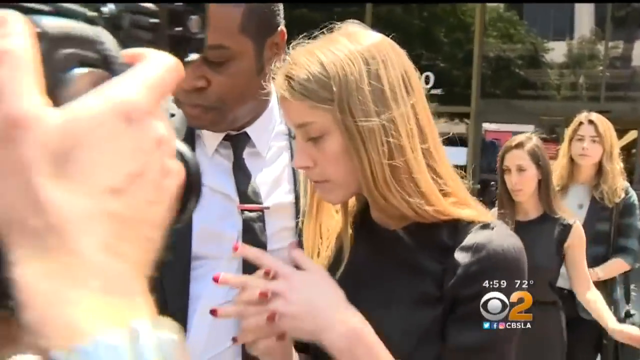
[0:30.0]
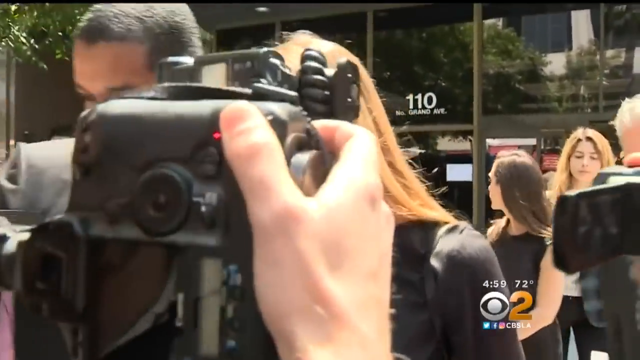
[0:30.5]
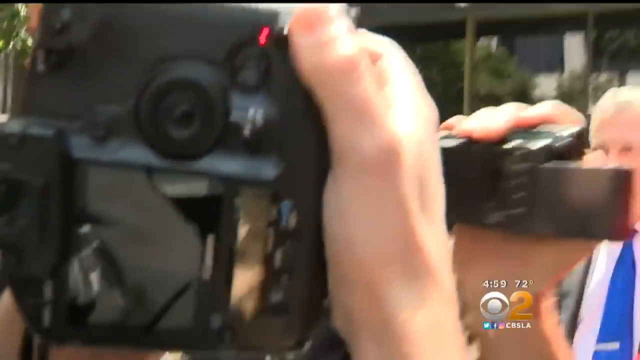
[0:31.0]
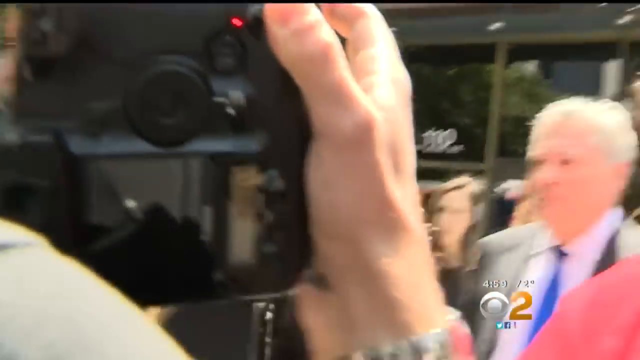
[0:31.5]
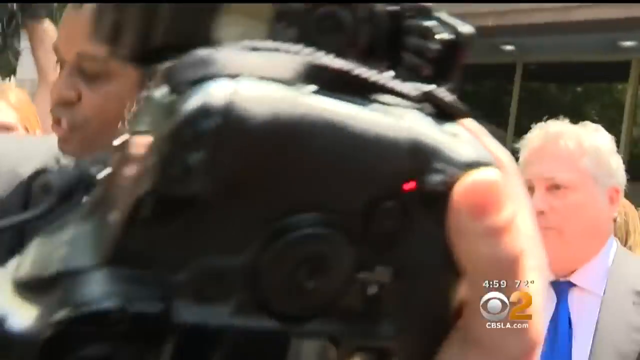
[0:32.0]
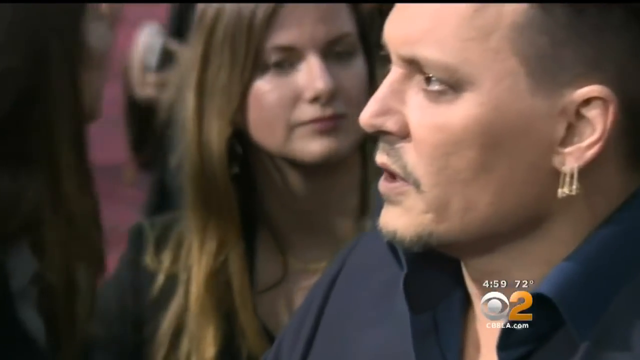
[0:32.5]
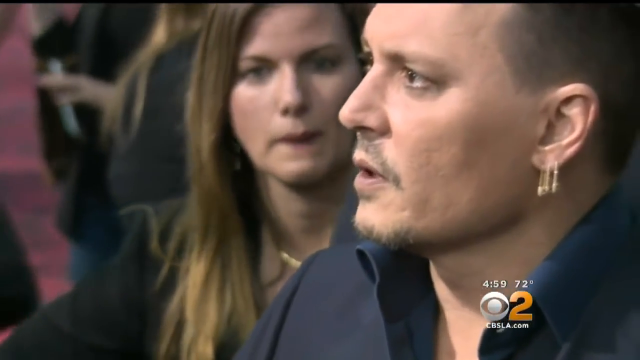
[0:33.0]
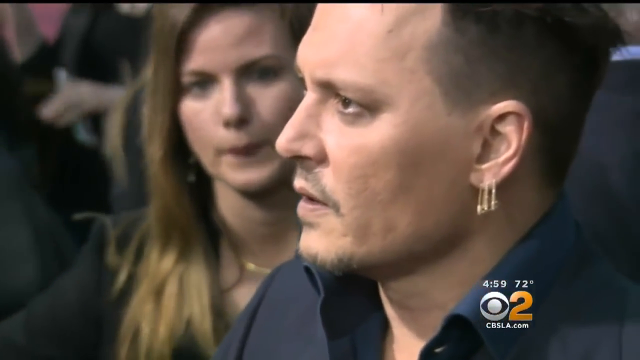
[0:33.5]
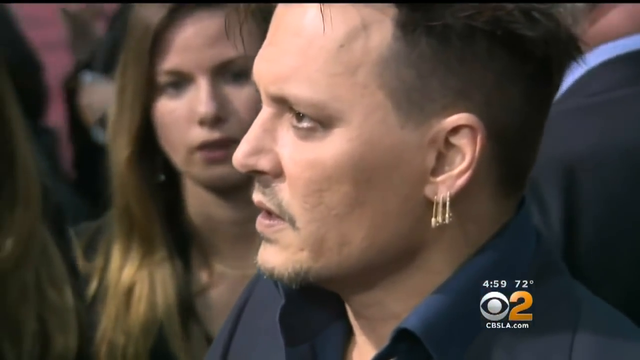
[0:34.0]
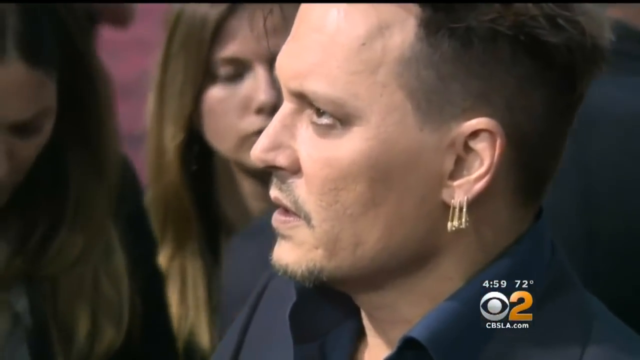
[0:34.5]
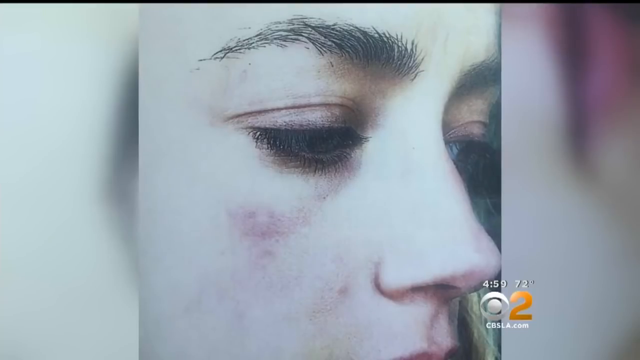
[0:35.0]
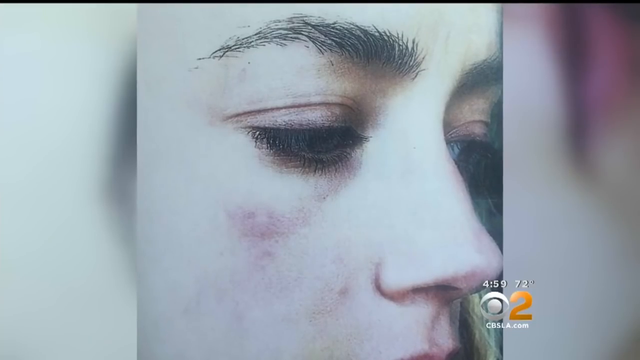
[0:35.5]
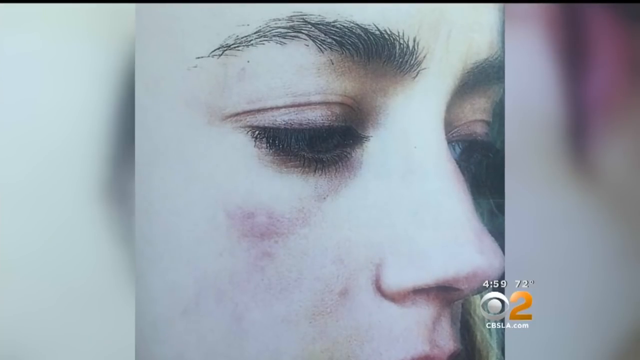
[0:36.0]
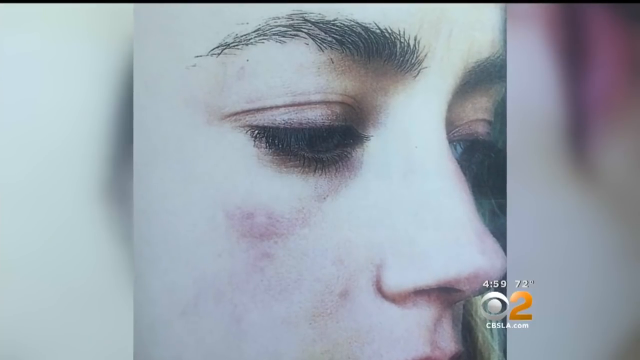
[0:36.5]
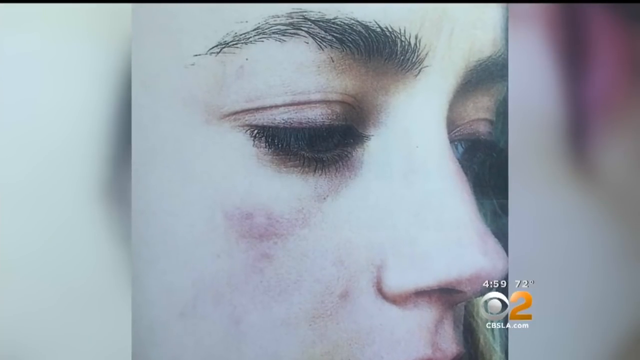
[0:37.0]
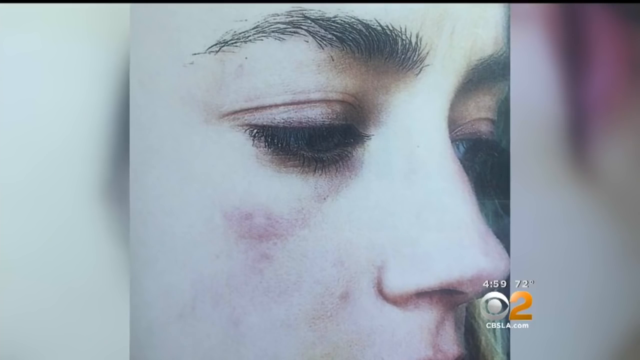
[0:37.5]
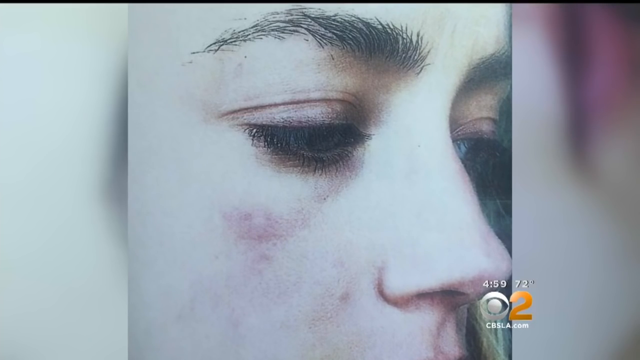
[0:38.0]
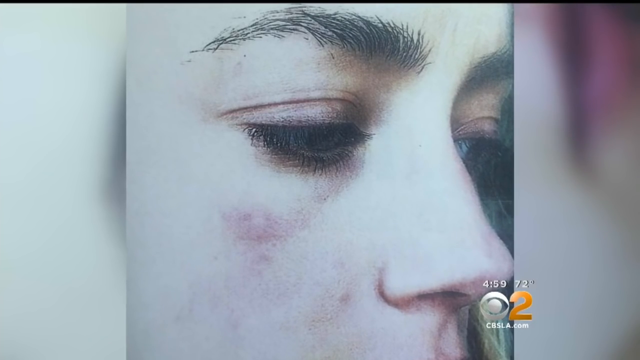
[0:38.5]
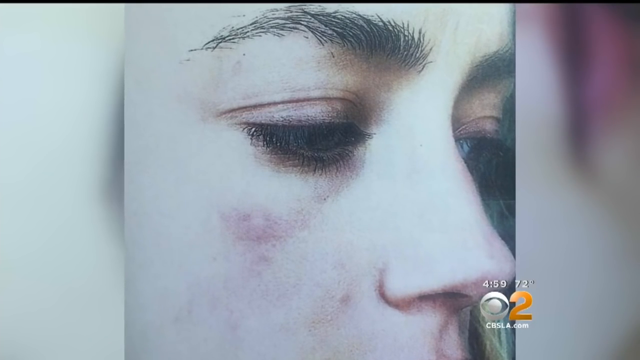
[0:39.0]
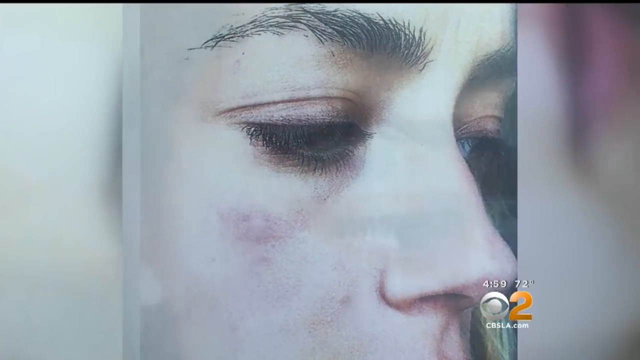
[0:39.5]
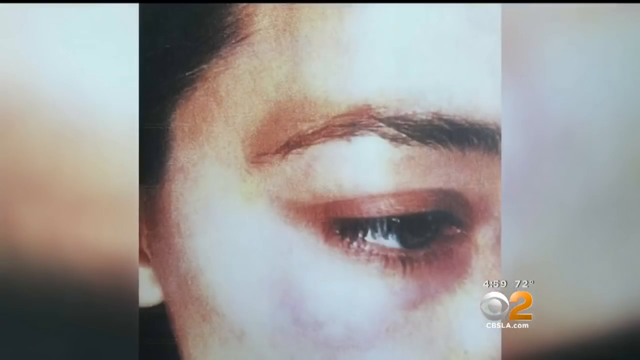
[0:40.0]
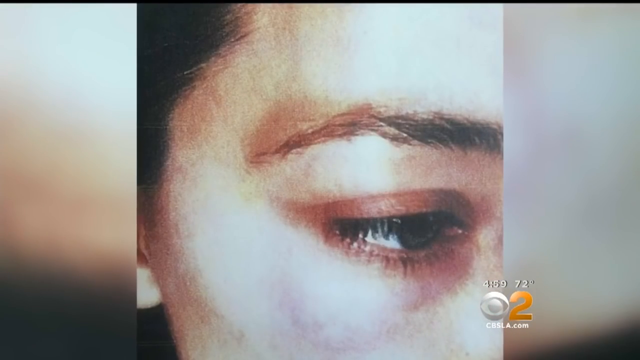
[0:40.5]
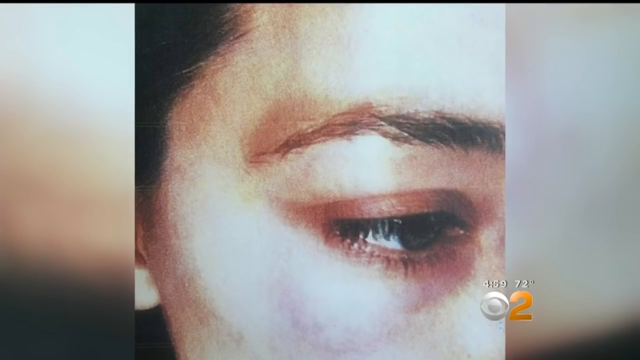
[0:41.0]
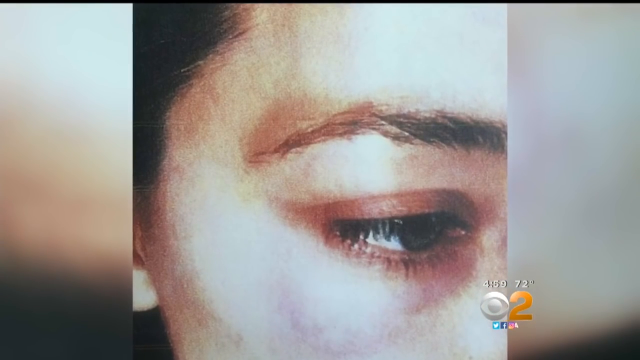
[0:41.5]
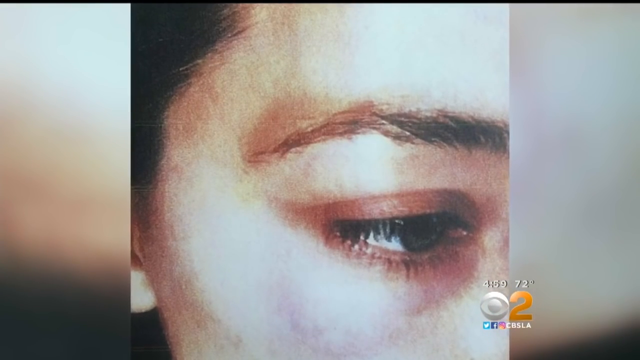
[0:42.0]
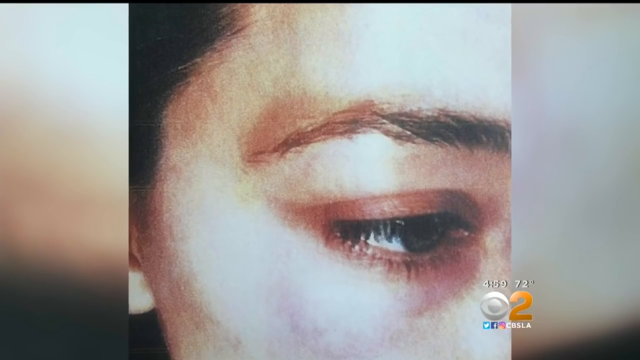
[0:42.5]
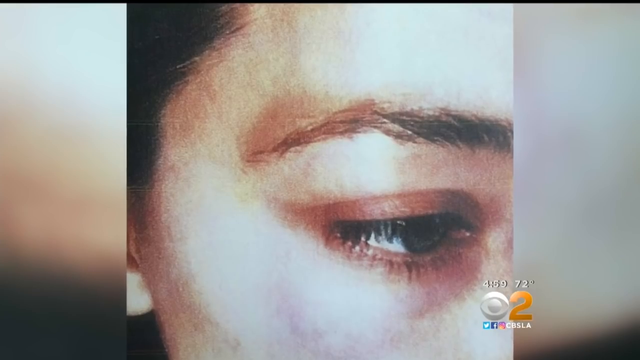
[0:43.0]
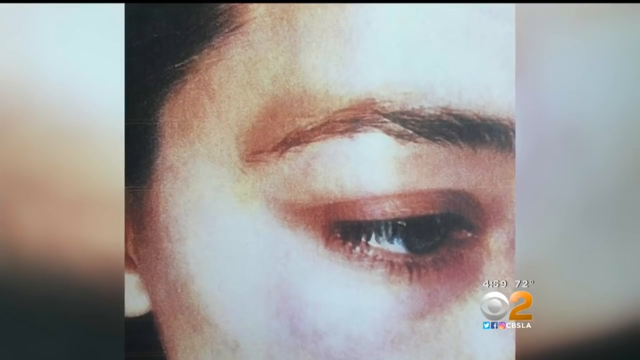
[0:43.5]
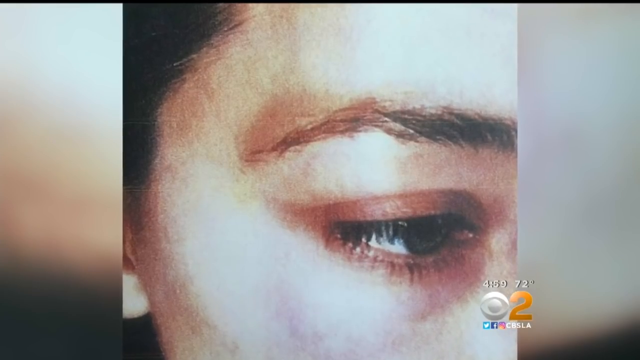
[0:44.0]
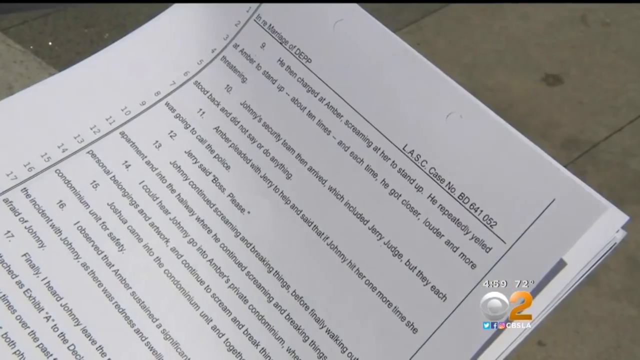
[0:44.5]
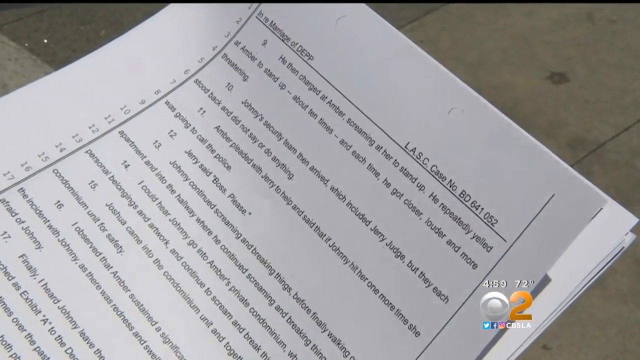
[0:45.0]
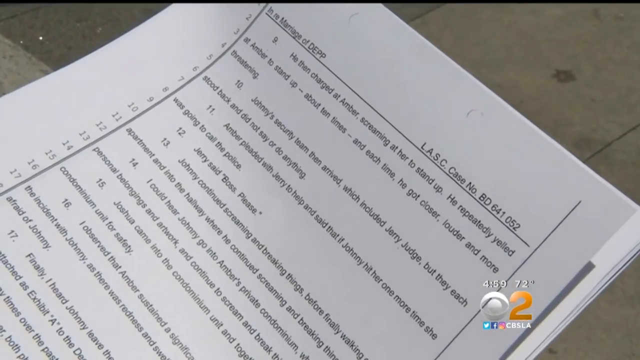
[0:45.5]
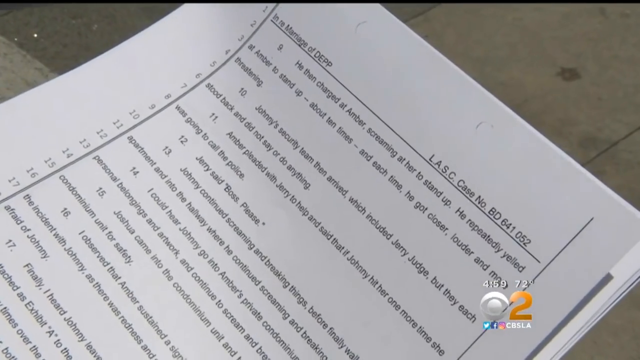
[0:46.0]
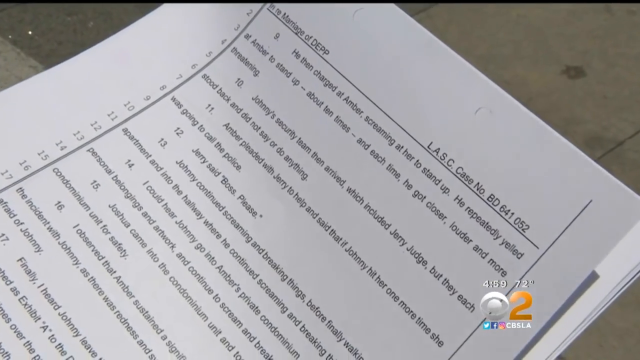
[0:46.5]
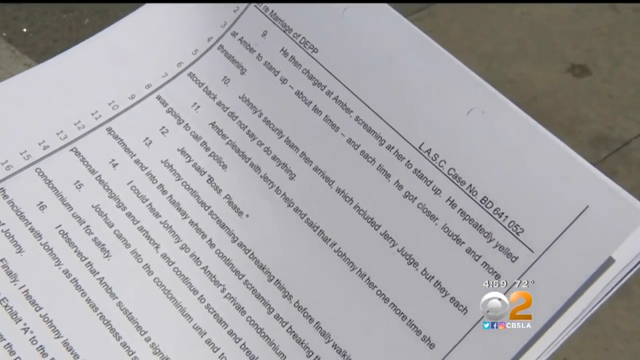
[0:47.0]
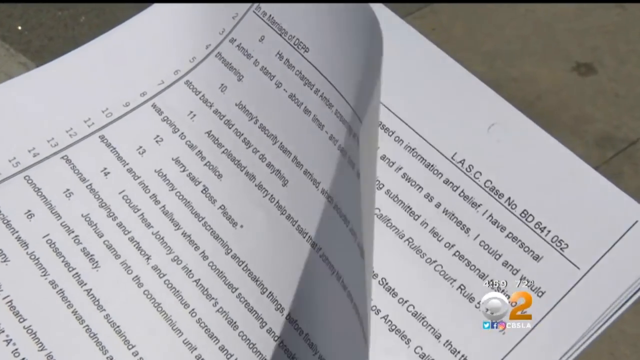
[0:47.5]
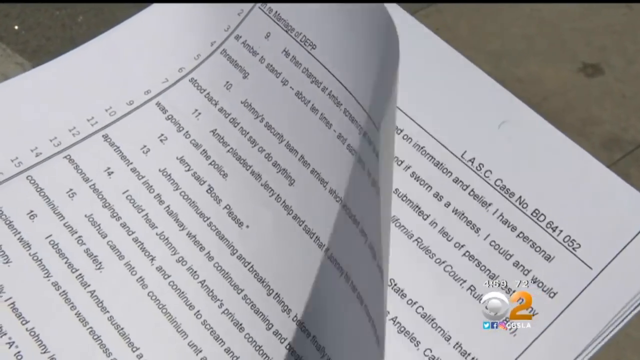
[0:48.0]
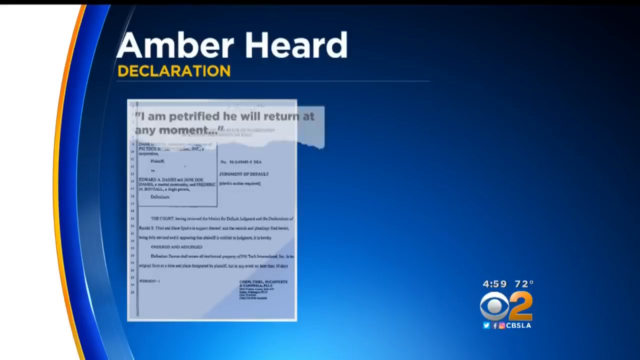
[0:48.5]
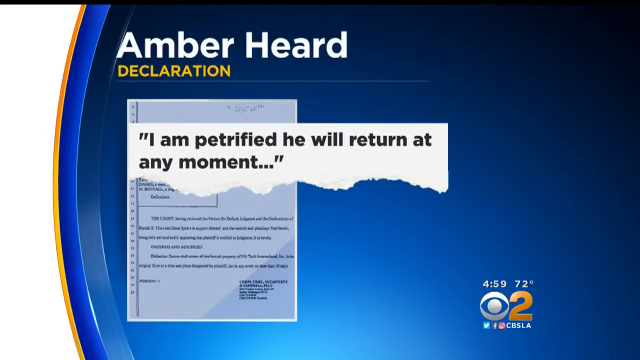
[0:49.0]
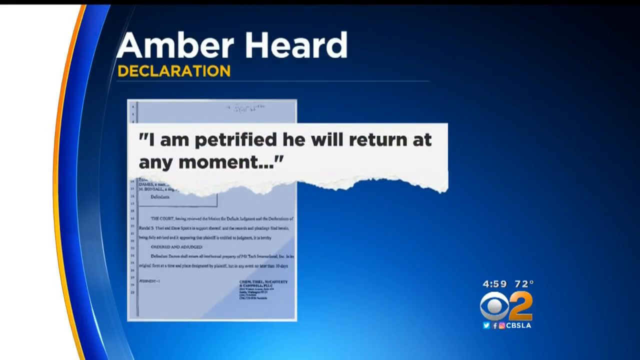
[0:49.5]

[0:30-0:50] The woman in the black dress is captured on camera by many paparazzi. A banner says there is a restraining order against Johnny Depp and that this is happening in downtown LA; the woman in the black dress seems to be a victim of the actor. Footage of the actor follows, then a picture of the young woman with an injury on her cheek; she seems to have physical injuries on her cheek and the upper side of her eye. Text about the case against Johnny Depp, an LACS case, names the woman as Amber and reads: "he then charged at Amber screaming at her to stand up he repeatedly yelled at Amber to stand up about 10 times and each time he got closer louder and more threatening Johnny's security team then arrived which included Jerry Judge but they each stood back and did nothing". It appears to be some kind of transcript of what happened in that moment.